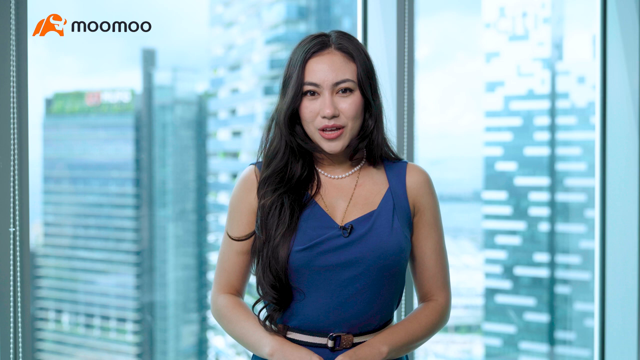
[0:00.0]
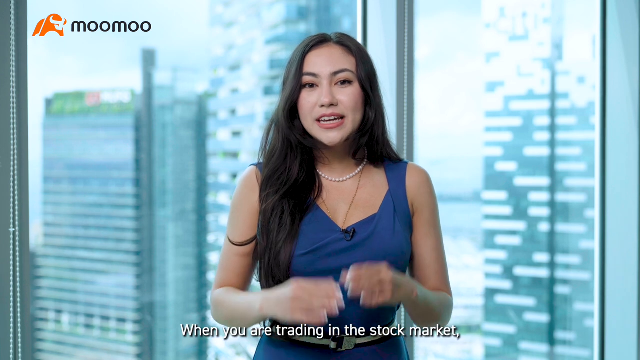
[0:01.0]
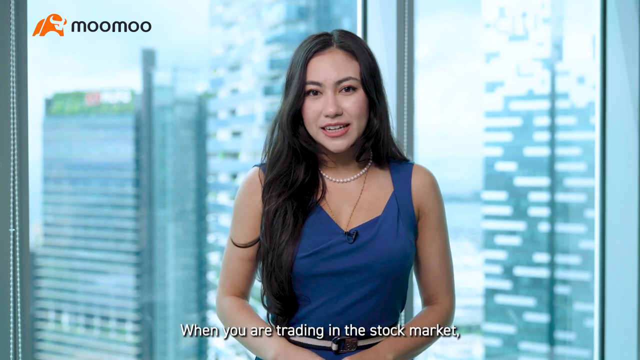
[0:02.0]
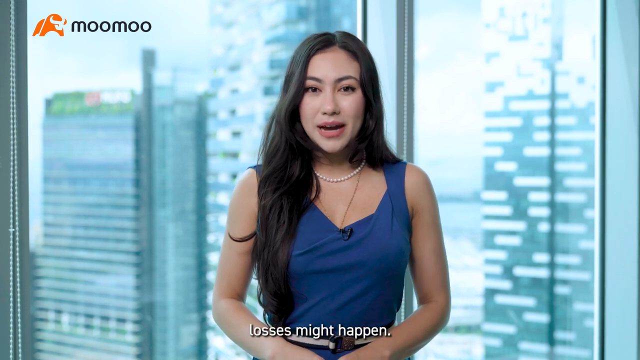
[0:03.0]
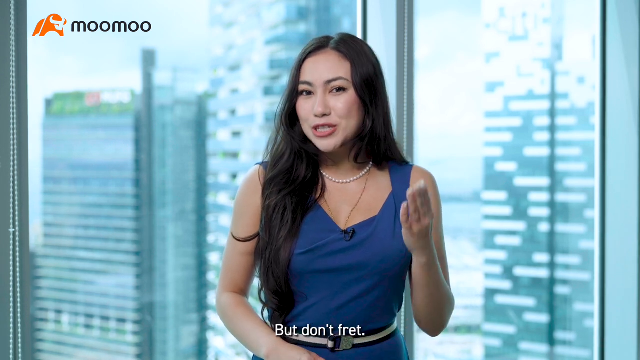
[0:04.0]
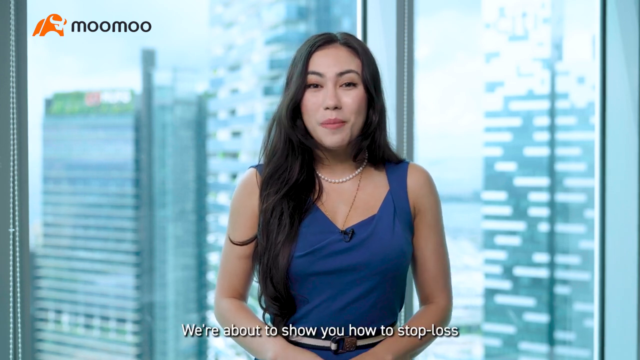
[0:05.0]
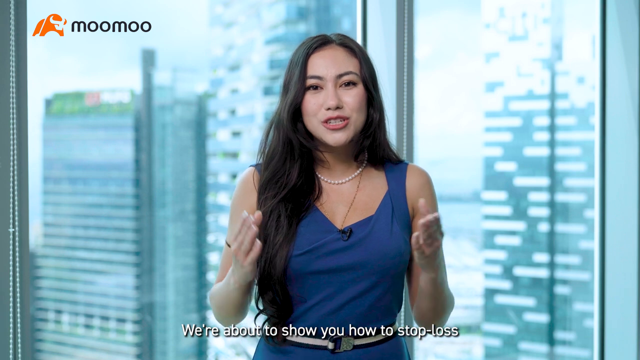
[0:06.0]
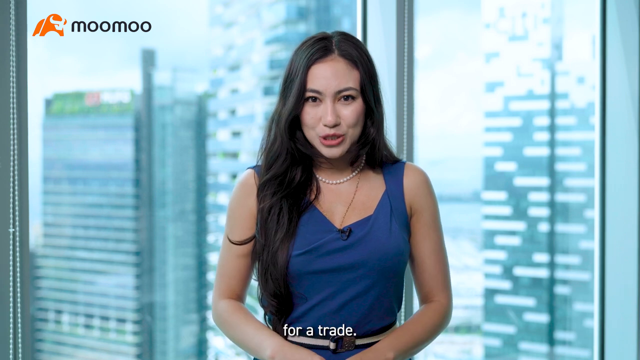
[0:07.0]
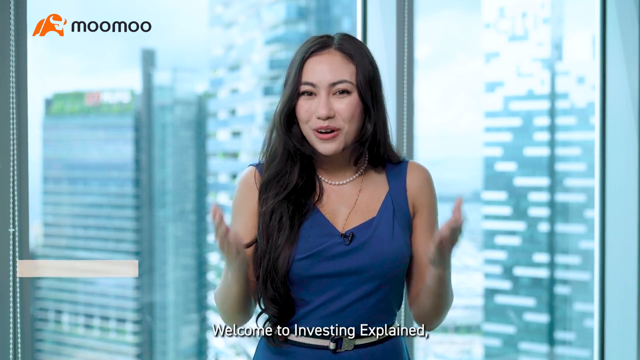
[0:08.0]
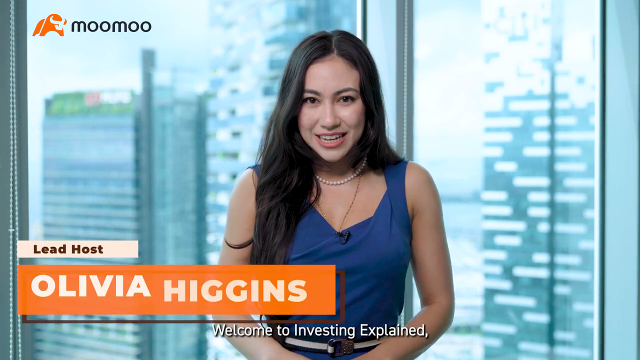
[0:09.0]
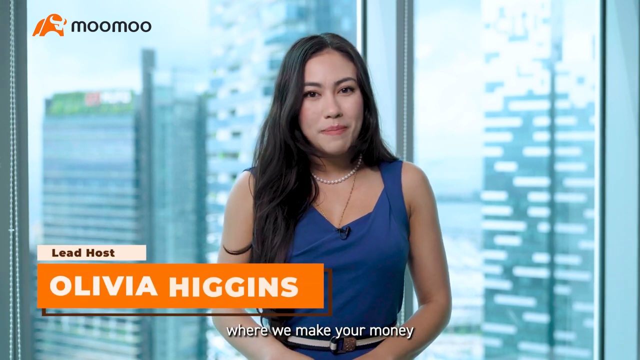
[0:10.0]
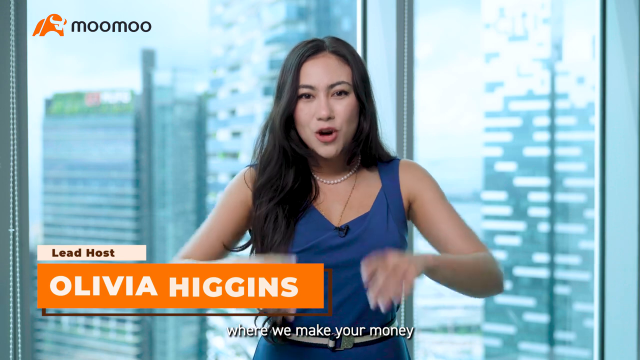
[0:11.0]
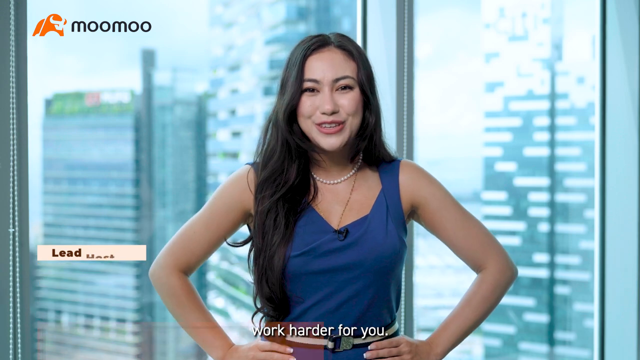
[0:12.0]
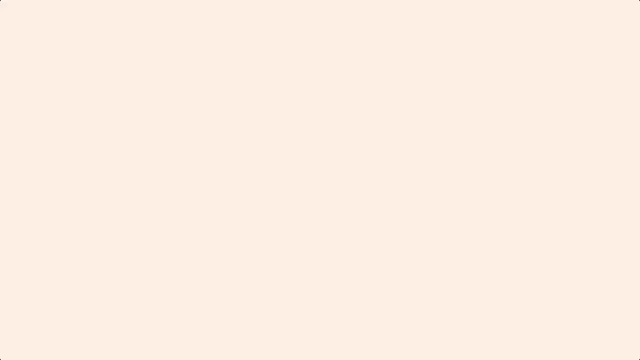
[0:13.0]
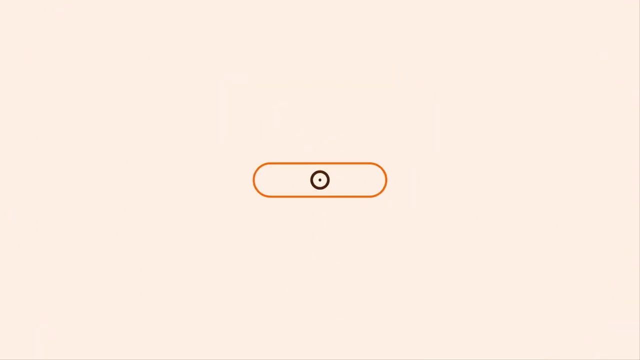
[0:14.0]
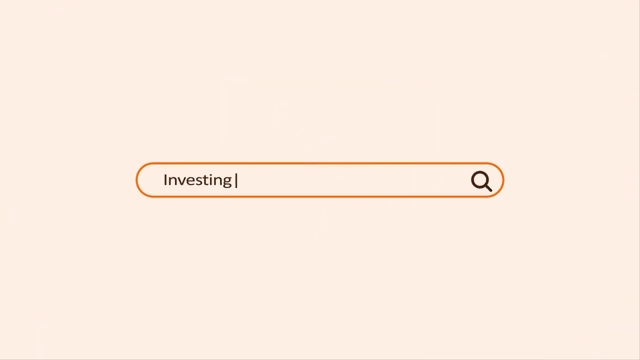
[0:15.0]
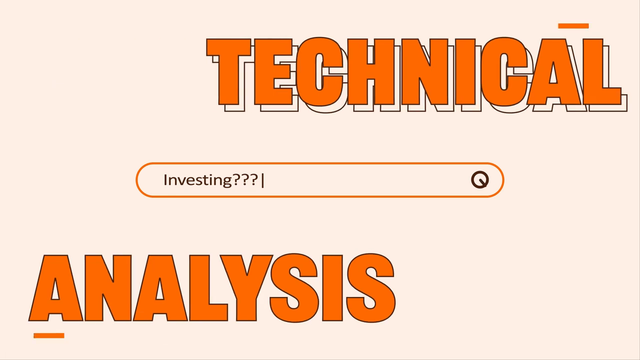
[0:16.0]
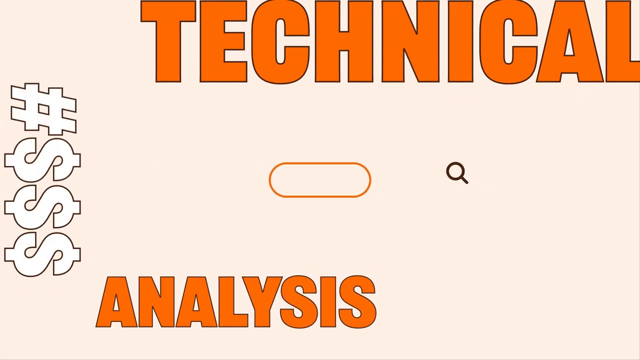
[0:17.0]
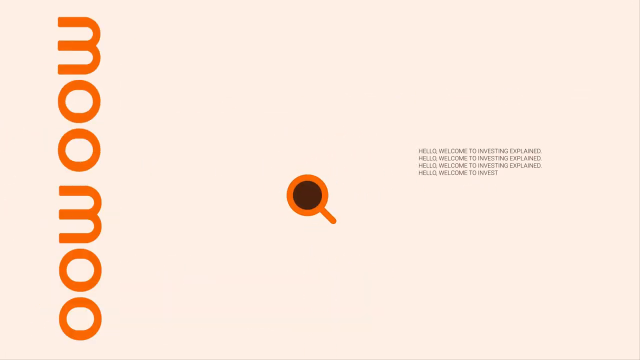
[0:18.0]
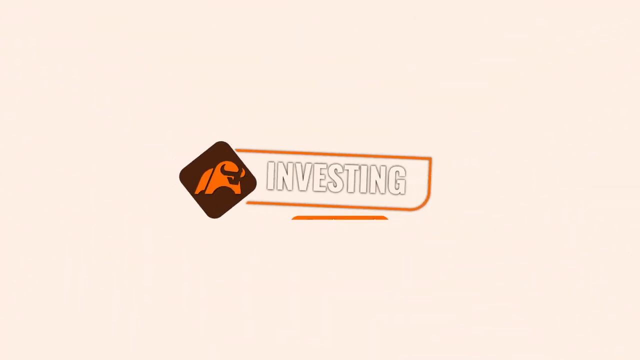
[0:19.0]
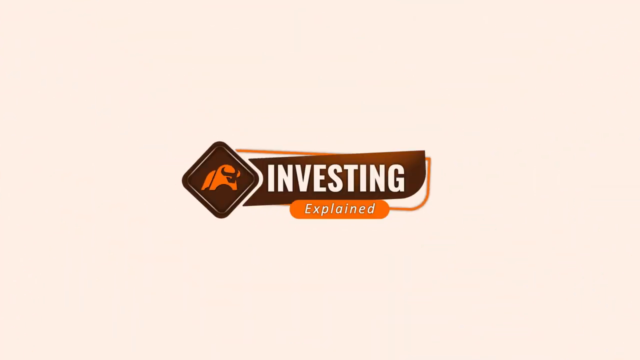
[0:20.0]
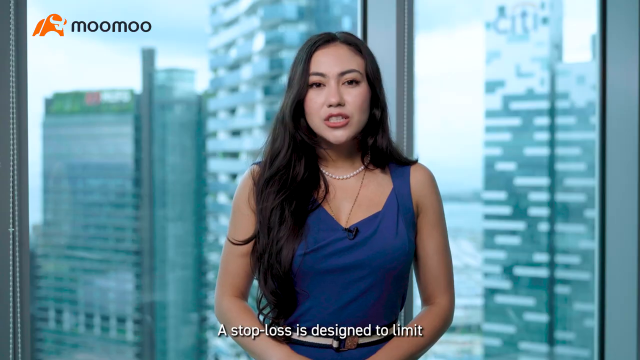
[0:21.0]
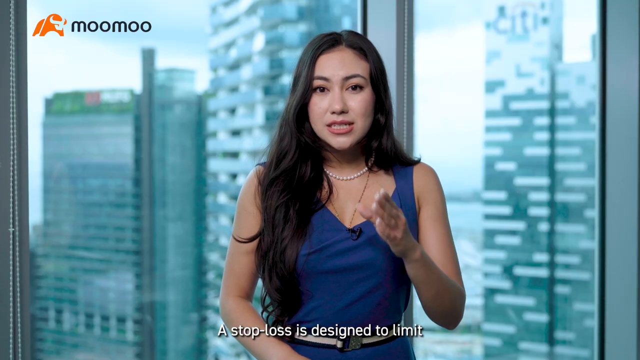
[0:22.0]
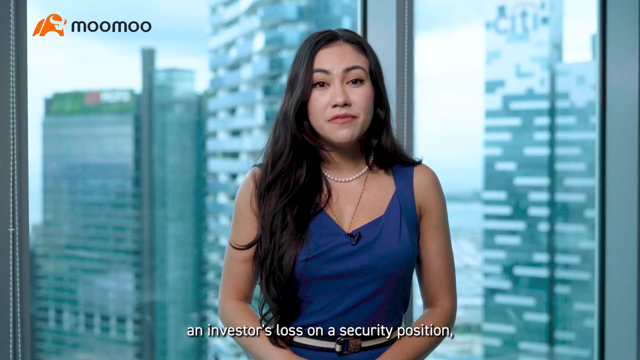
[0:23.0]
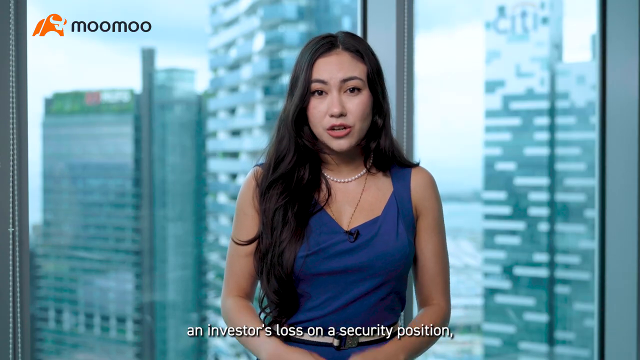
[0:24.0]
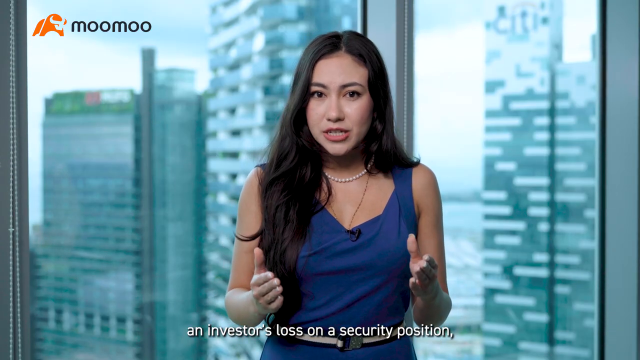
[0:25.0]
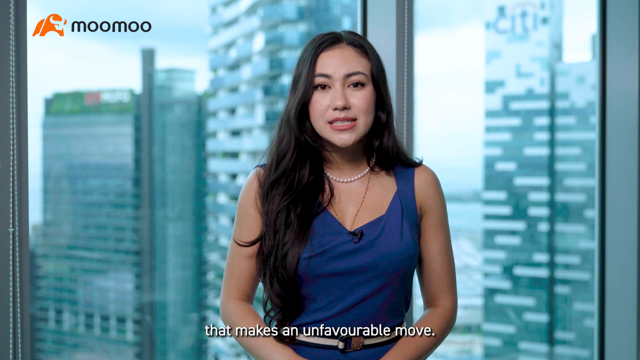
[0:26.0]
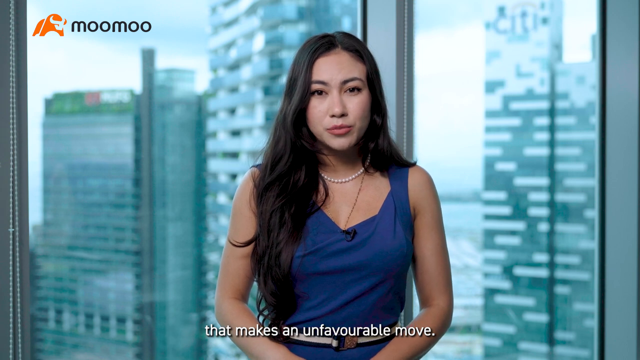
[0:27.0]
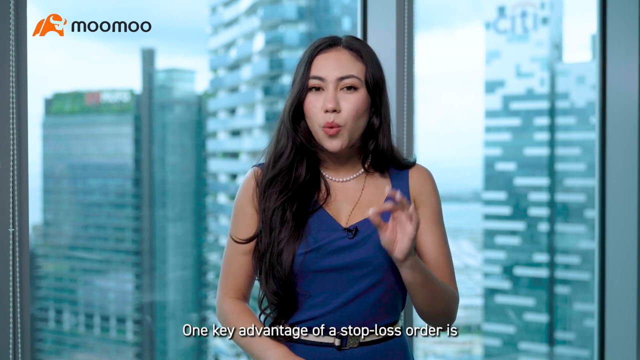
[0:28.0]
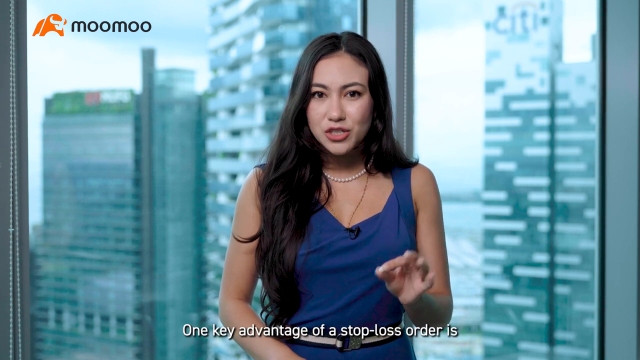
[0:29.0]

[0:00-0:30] A woman who appears to be Asian or Asian American wears a blue dress and a white pearl necklace, with long, flowing black hair falling in front of her shoulder. Her name, "Olivia Higgins," appears in white letters in an orange box in the bottom left-hand corner. She speaks in what looks like a studio in the city. The video then flips to different screens; one appears to show a search bar containing the word "investing." It cuts back to the anchor, who starts talking again and gestures with her hands quite a bit. Captioning scrolls across the bottom of the screen as she speaks, and she appears to be giving investing advice to viewers.